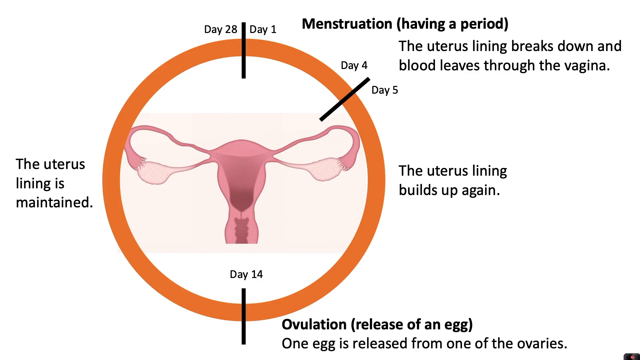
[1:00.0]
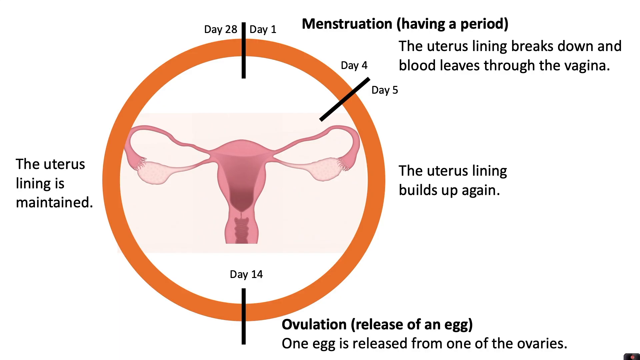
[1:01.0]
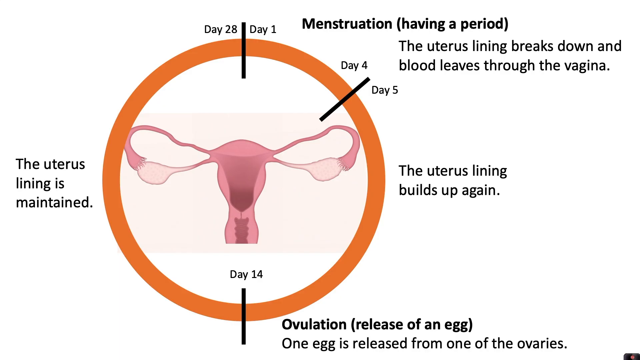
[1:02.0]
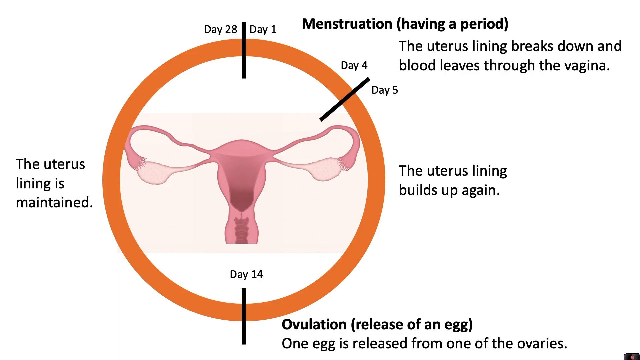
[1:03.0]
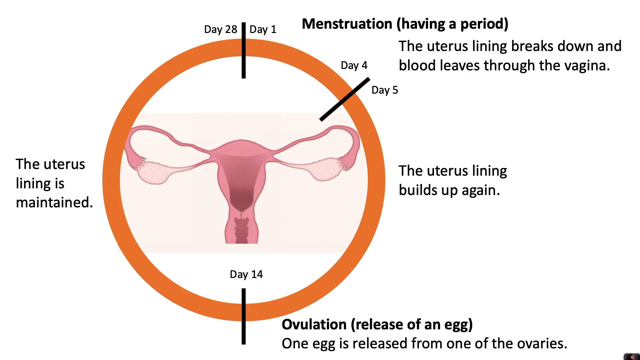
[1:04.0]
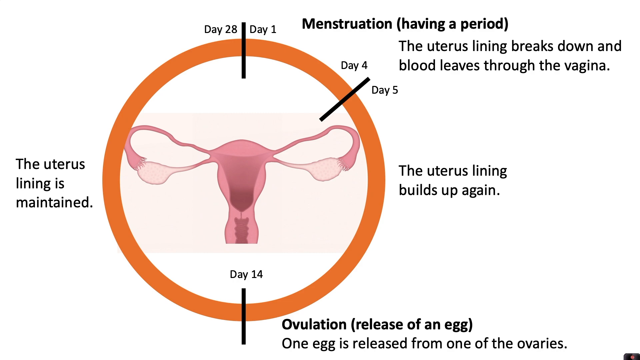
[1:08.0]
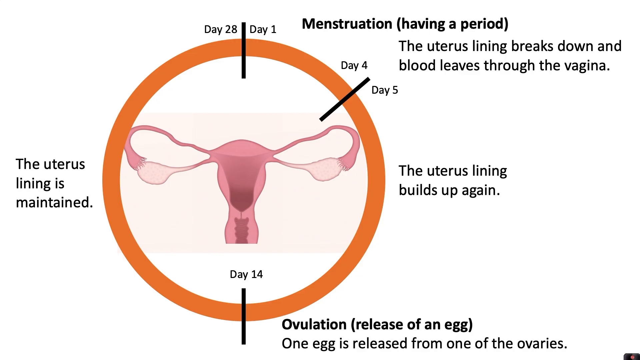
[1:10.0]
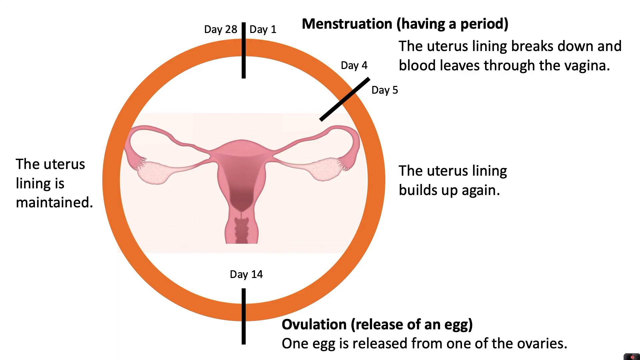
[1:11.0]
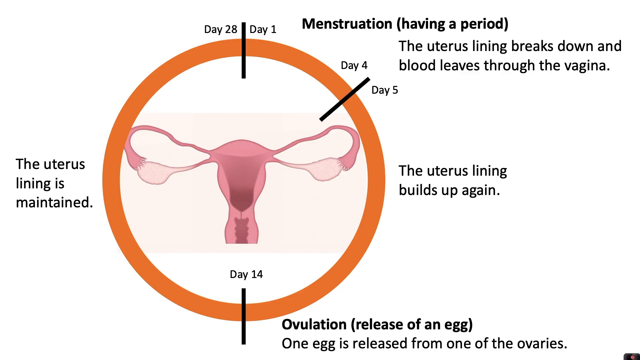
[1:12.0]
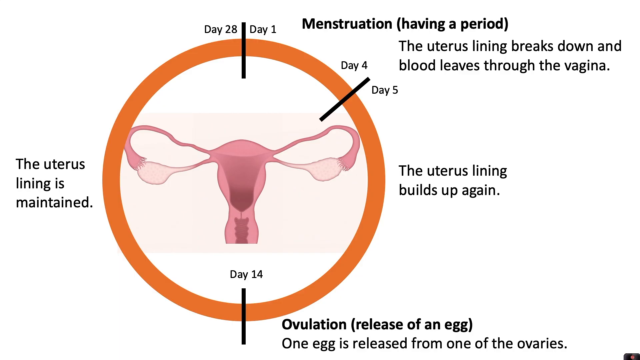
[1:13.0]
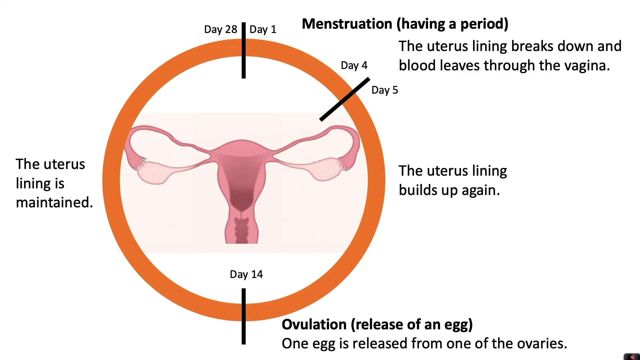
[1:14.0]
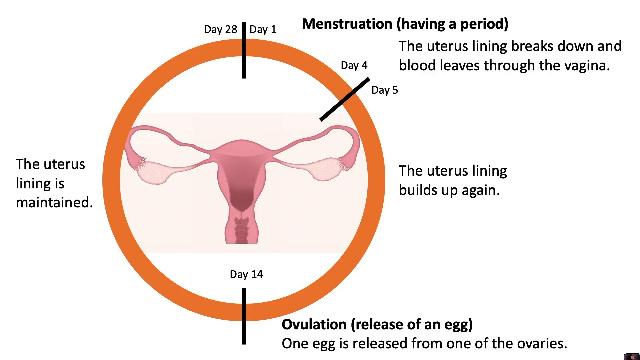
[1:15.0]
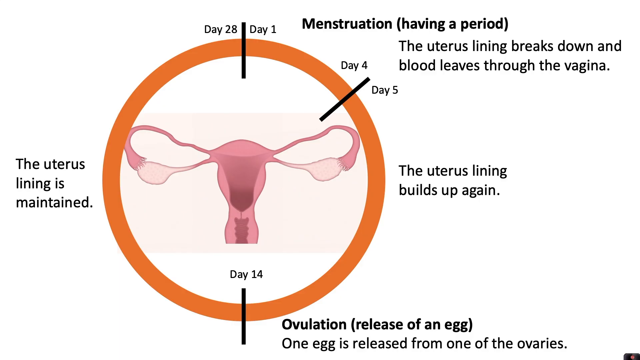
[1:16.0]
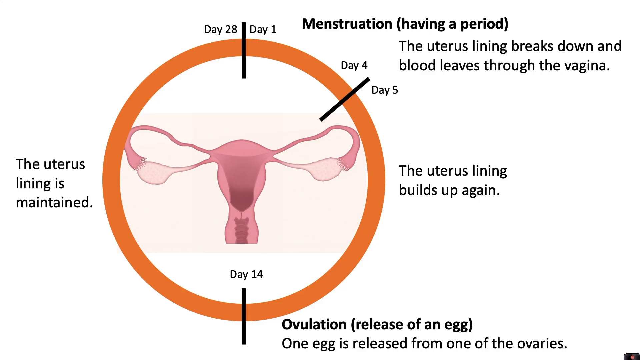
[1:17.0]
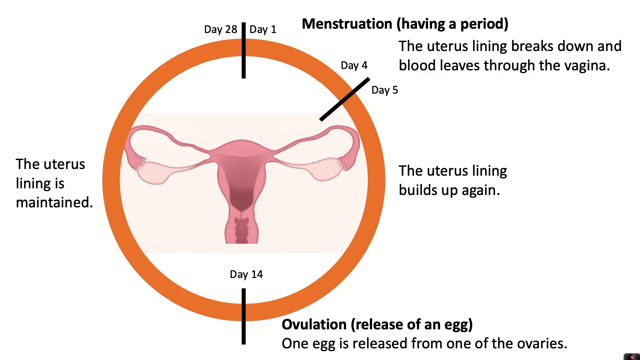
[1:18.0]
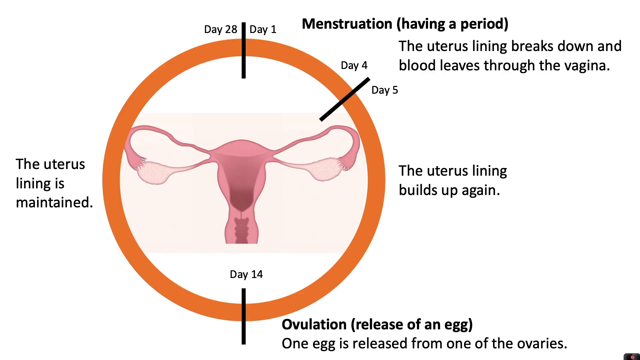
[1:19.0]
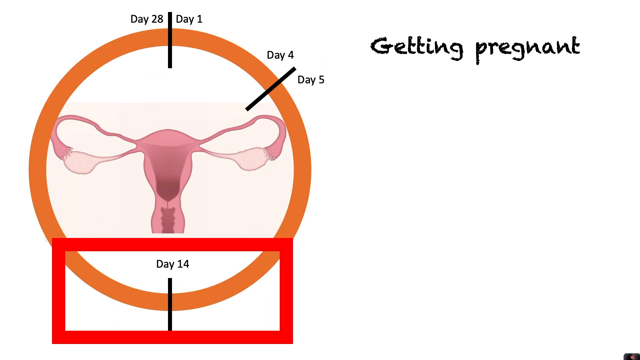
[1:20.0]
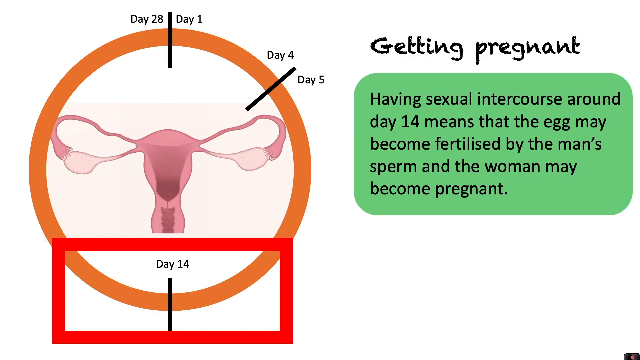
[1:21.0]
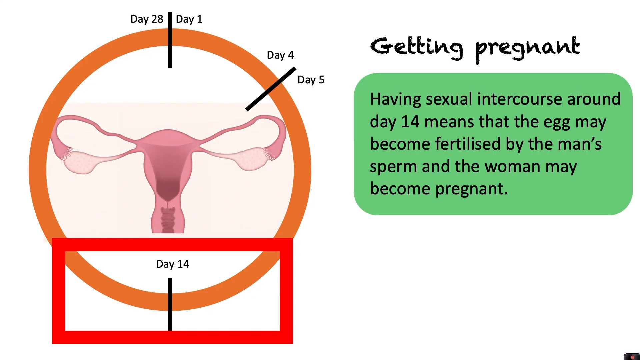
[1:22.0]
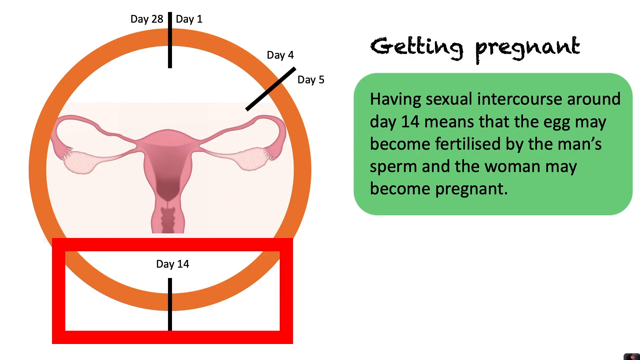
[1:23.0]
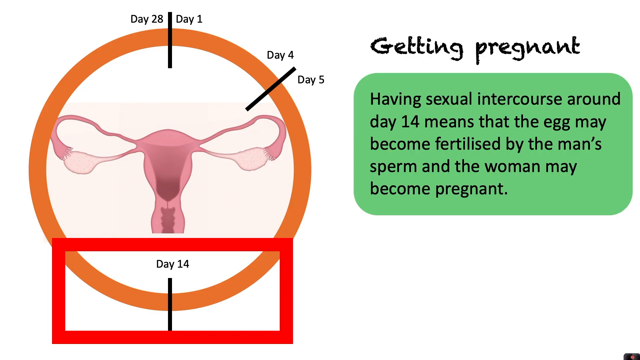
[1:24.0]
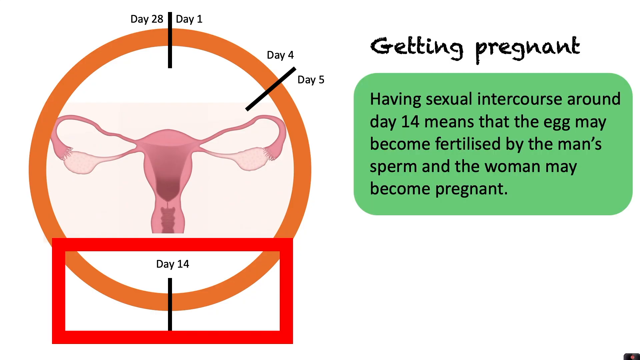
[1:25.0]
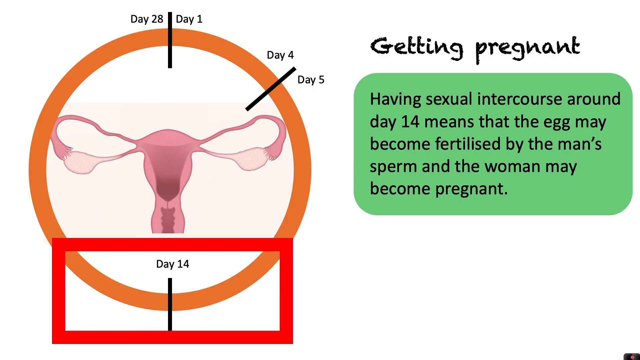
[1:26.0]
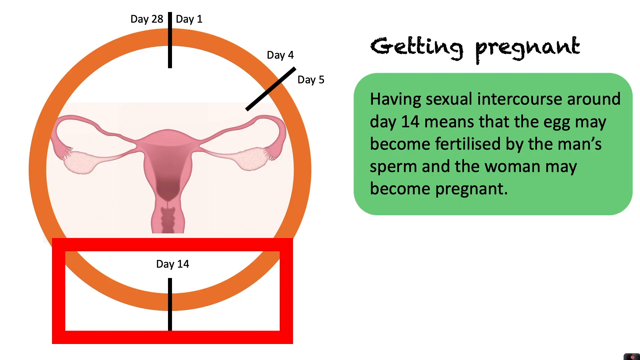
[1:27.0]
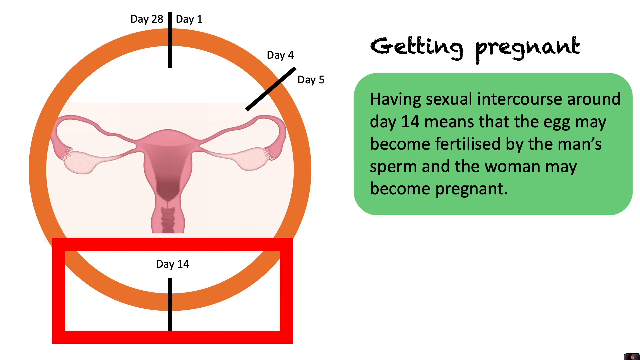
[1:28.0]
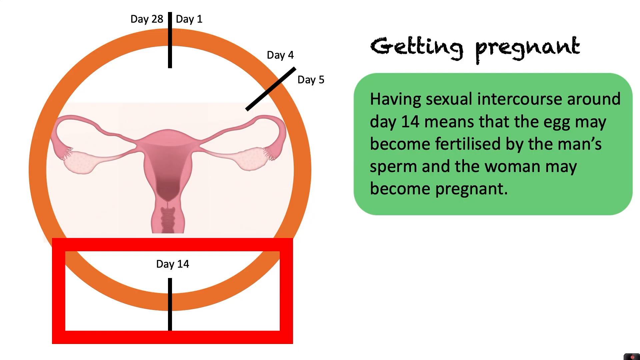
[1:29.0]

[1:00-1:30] A slide with a white background shows a large circle with an orange border that is white on the inside, with a picture of a woman's reproductive system in the middle. Three tick marks on the circle mark the days: day 28, day 1, day 4, day 5 and day 14. Black text surrounds the circle. Toward the top right it reads "menstruation (having a period). The uterus lining breaks down and blood leaves through the vagina." At the right center of the circle it reads "the uterus lining builds up again." Near the bottom of the circle it reads "ovulation (release of an egg). One egg is released from one of the ovaries." To the left of the middle of the circle it reads "the uterus lining is maintained." The next slide shows the same orange-bordered circle with the picture of the reproductive system inside, but an outline of a red rectangular box overlaps the bottom part of the circle, and the circle is moved more to the left side of the screen. On the right side of the screen, a heading at the top reads "Getting Pregnant" in black letters. Below it, a green rectangular box with rounded corners contains black text reading "Having sexual intercourse around day 14 means that the egg may become fertilized by the man's sperm and the woman may become pregnant."